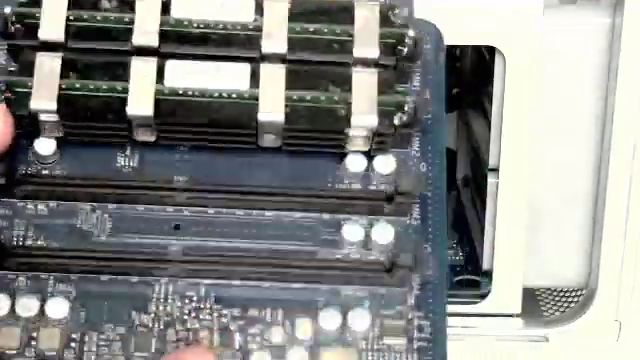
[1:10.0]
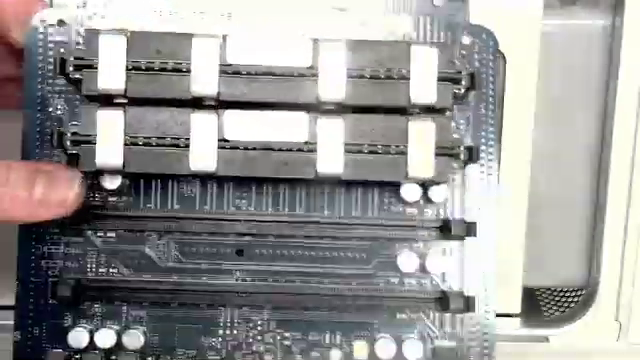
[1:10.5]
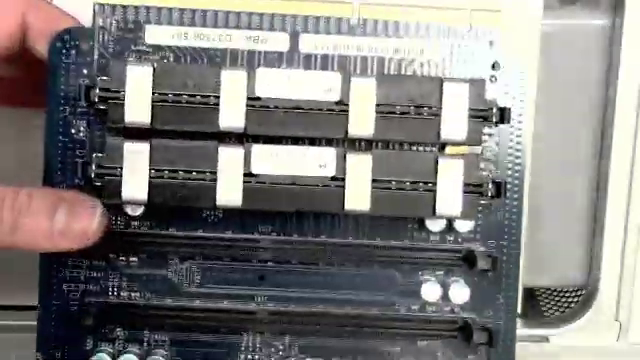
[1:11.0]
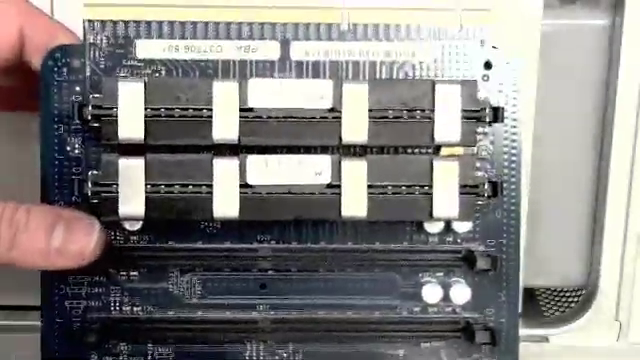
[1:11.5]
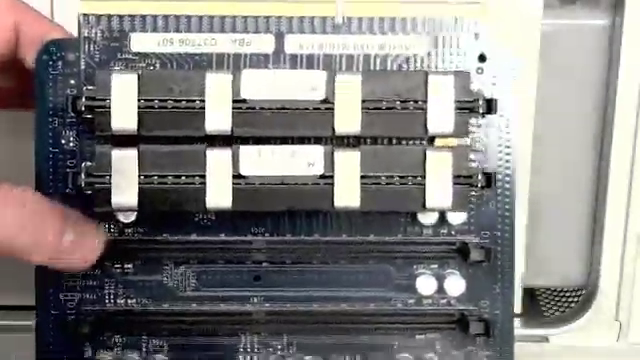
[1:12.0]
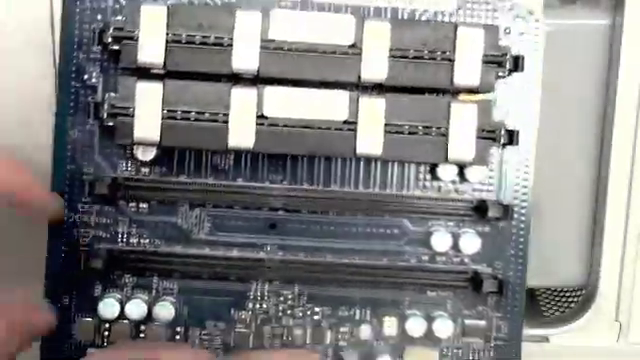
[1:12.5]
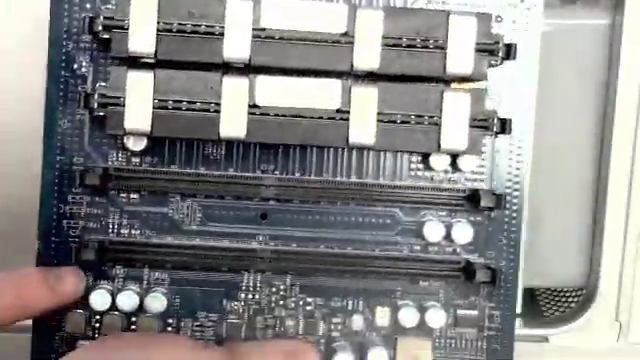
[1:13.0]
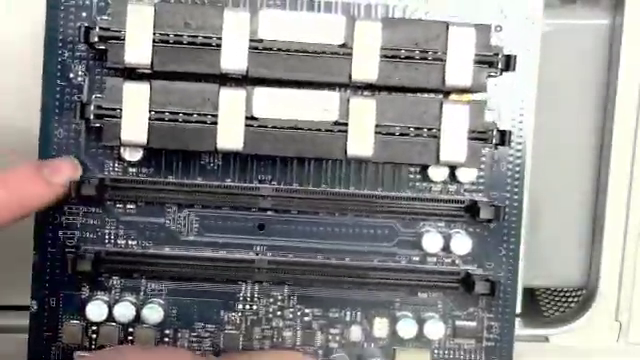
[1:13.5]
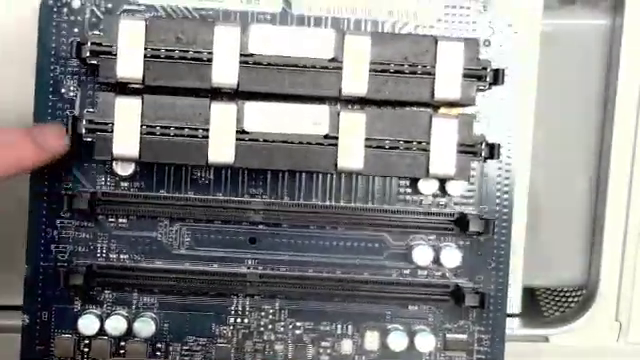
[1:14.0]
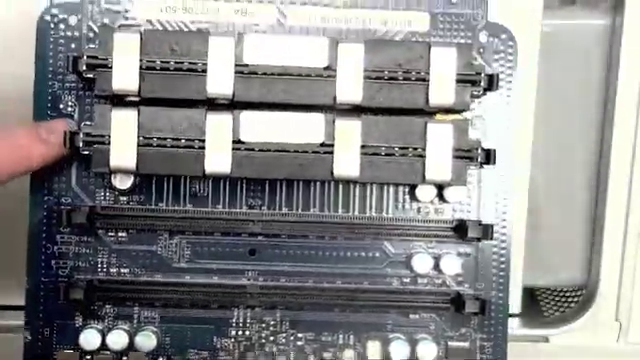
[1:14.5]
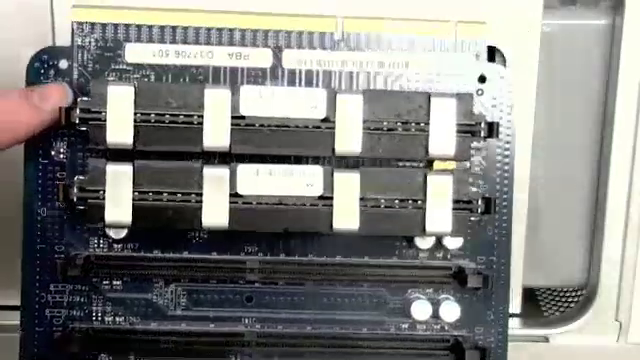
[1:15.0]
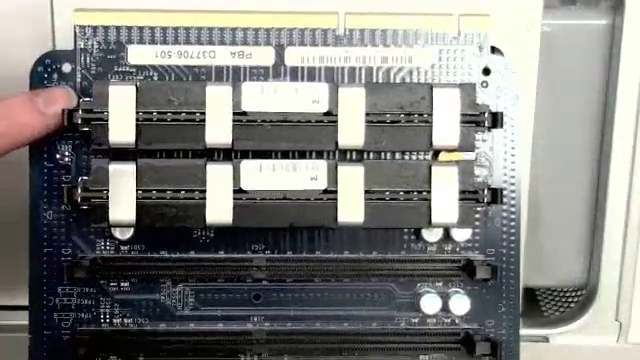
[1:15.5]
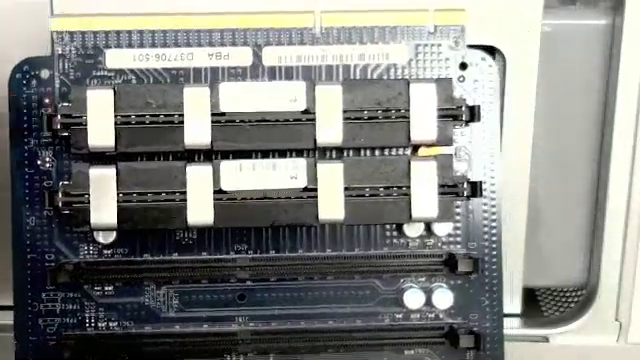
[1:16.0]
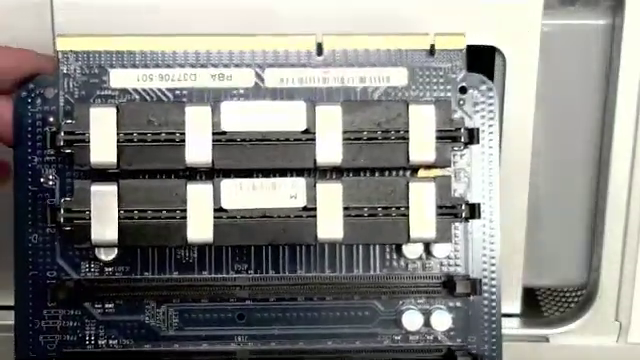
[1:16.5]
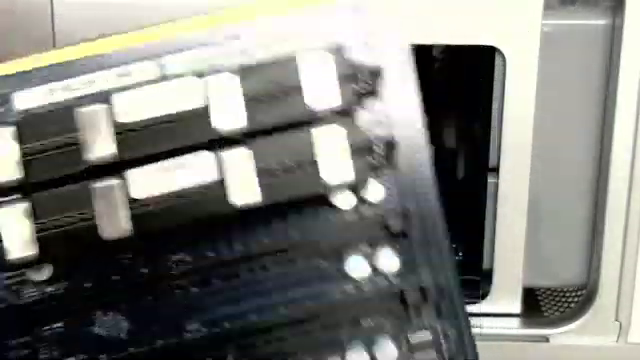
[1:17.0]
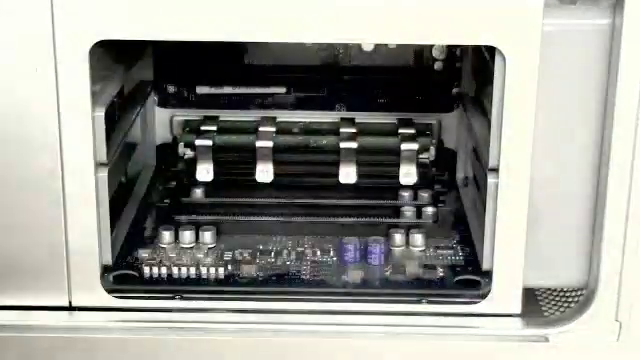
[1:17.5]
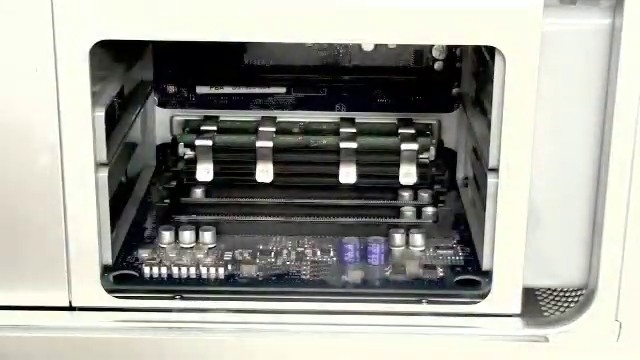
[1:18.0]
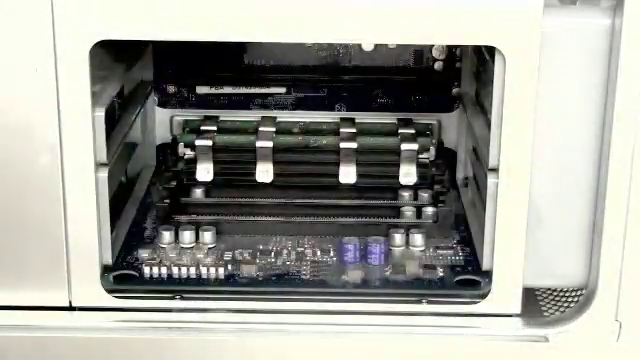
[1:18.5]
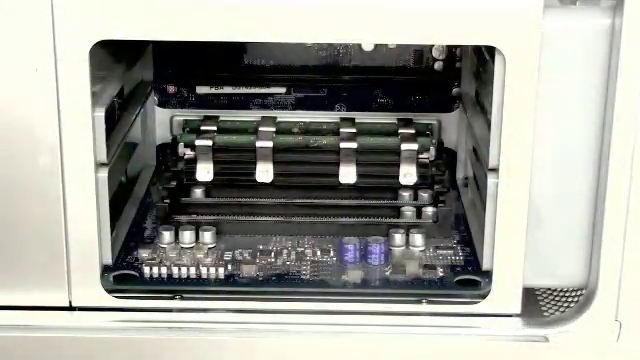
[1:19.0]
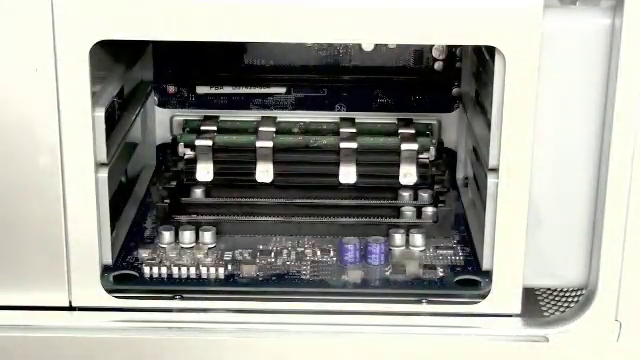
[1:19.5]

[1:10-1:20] The man continues showing the removed part to the camera at a good angle, pointing with his pointer finger at different parts of it. He then slowly brings it out of the frame to the left, the part turning downward toward the left as it leaves the frame. Once it is gone, there is a clear view of the section of the computer where it was removed, and the part is no longer there. The image stays still.